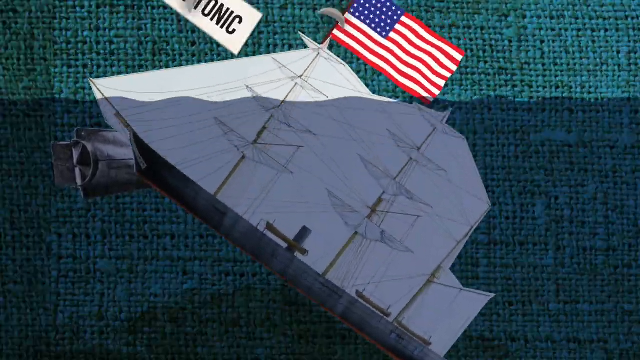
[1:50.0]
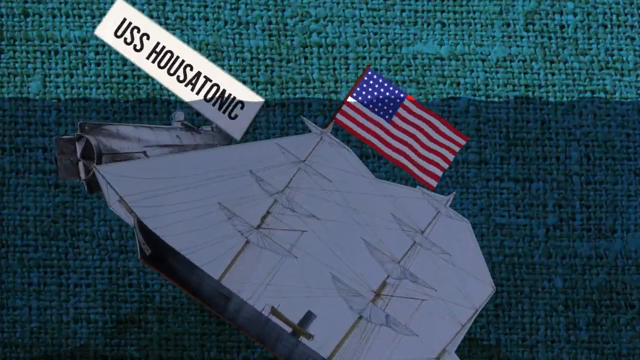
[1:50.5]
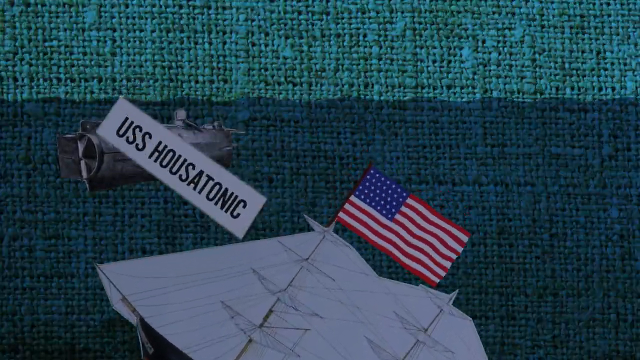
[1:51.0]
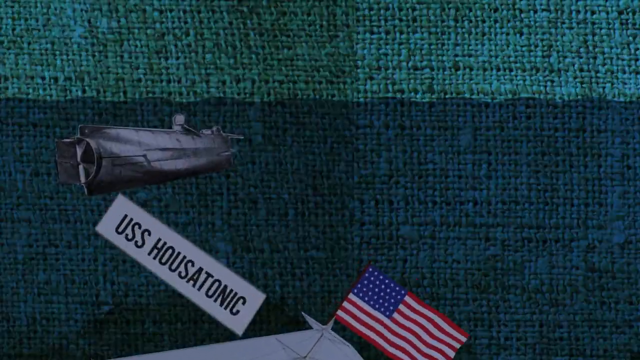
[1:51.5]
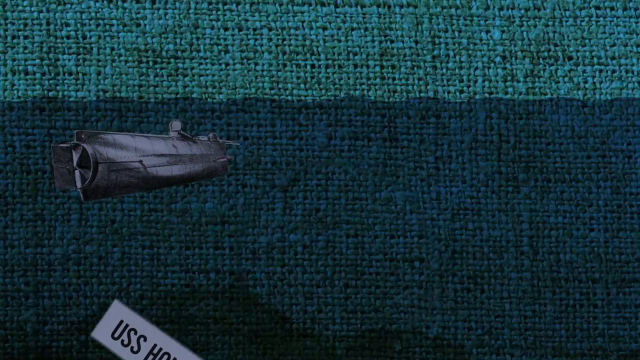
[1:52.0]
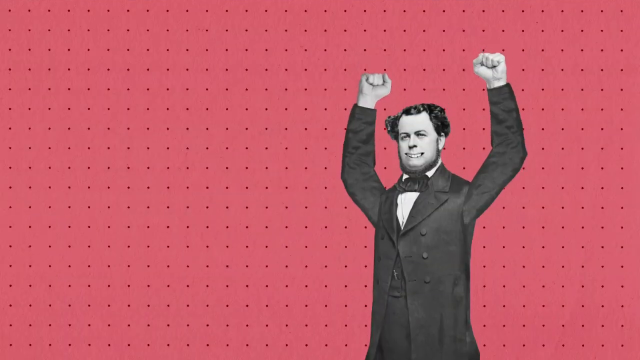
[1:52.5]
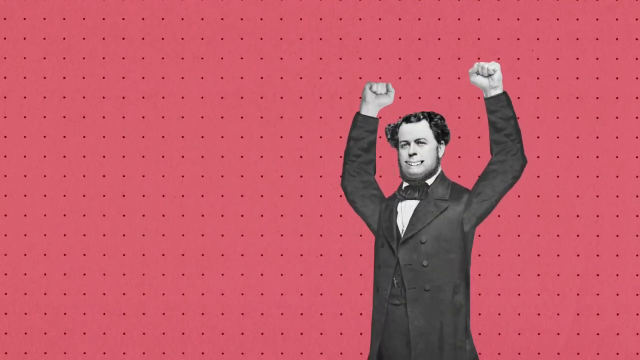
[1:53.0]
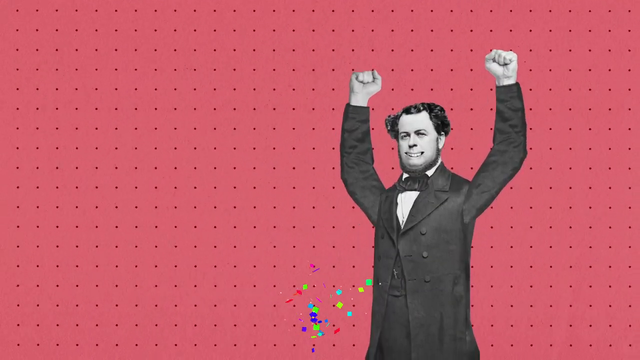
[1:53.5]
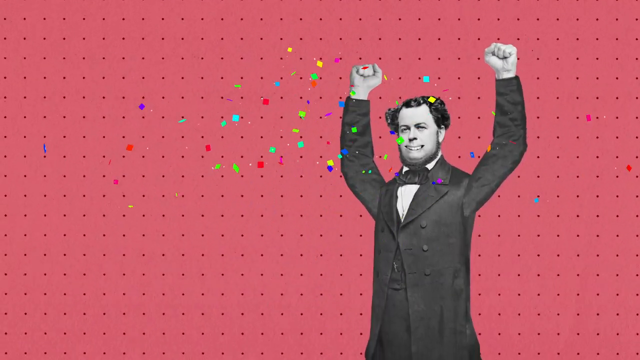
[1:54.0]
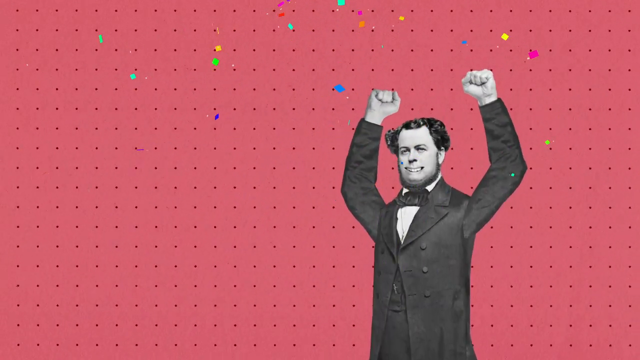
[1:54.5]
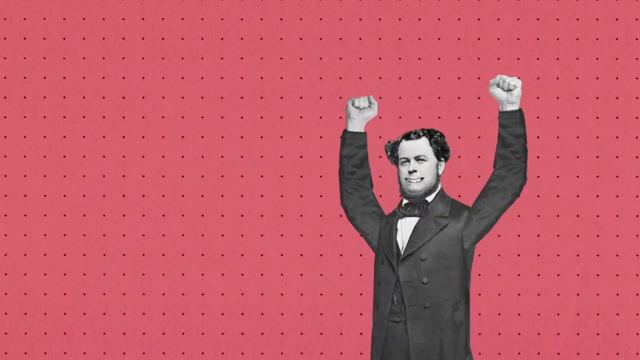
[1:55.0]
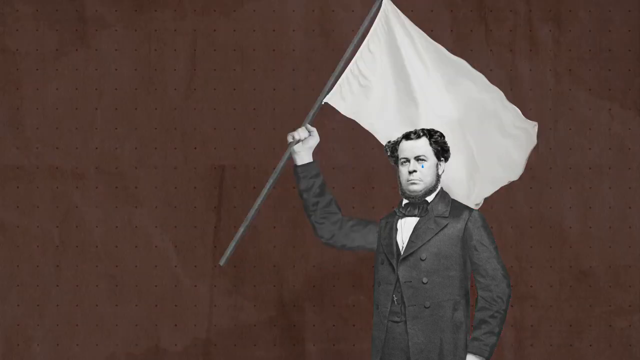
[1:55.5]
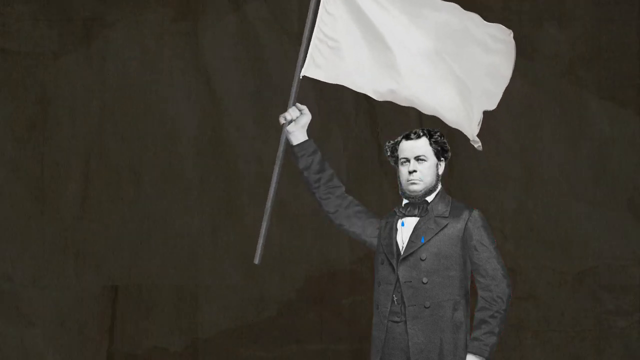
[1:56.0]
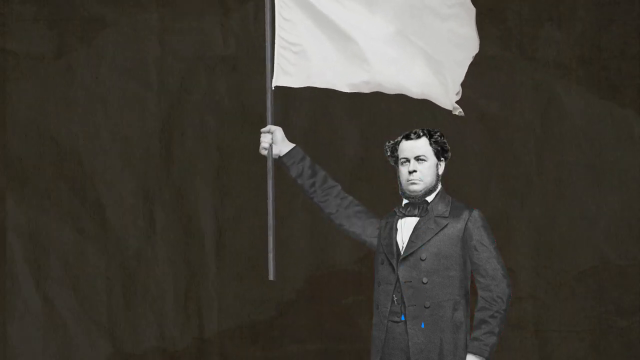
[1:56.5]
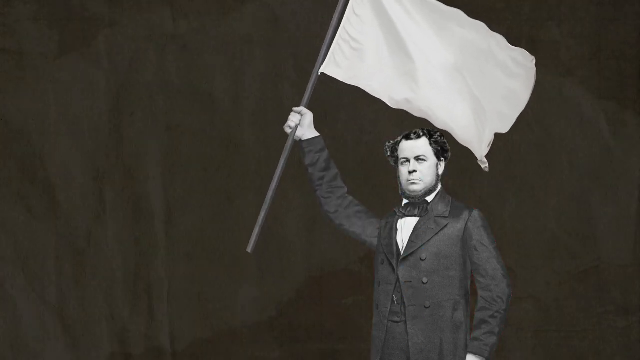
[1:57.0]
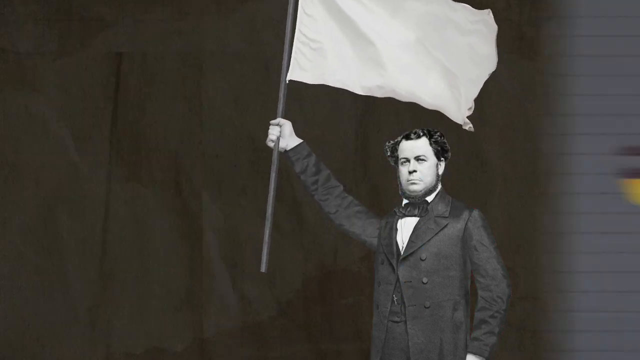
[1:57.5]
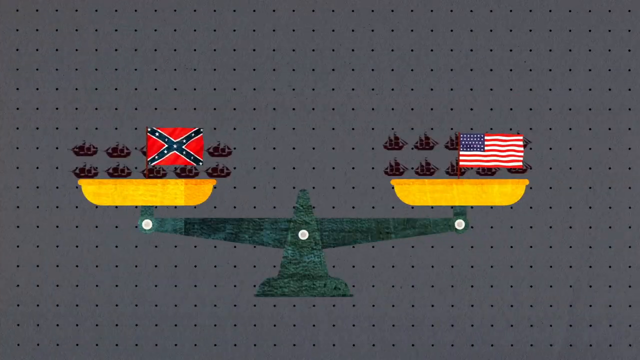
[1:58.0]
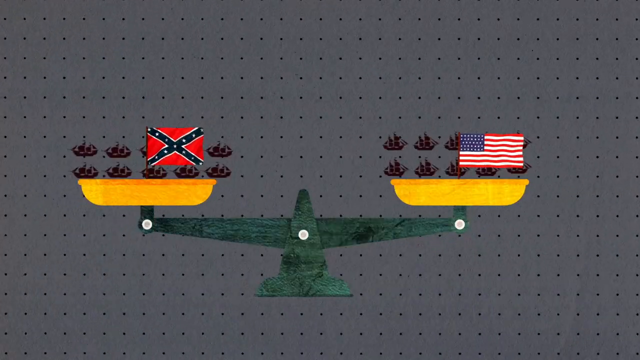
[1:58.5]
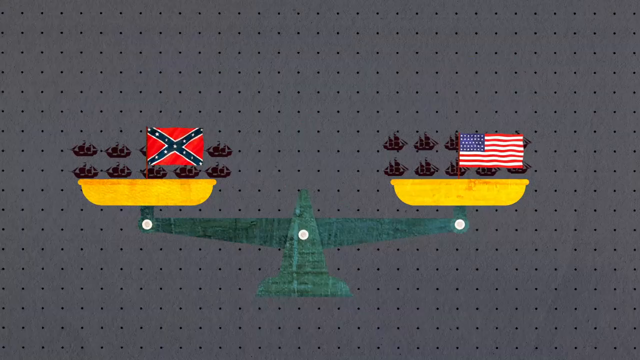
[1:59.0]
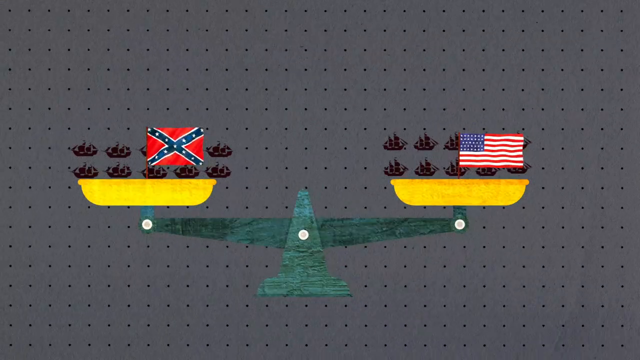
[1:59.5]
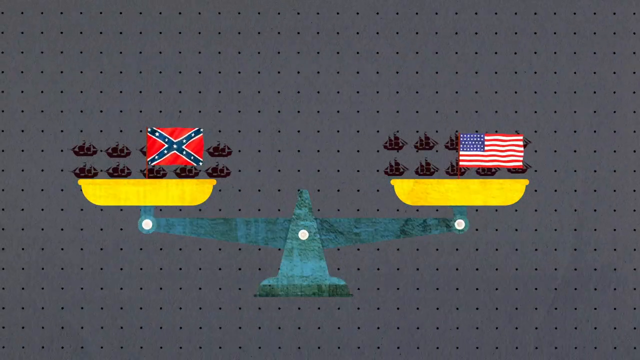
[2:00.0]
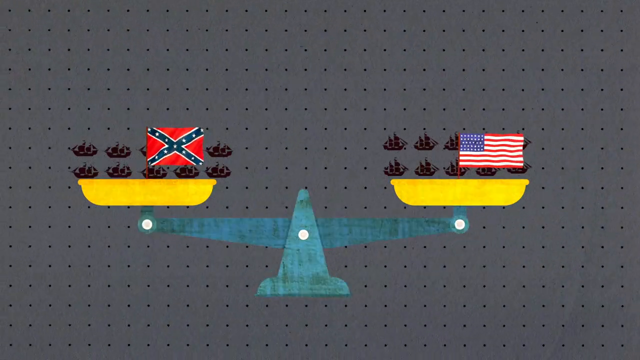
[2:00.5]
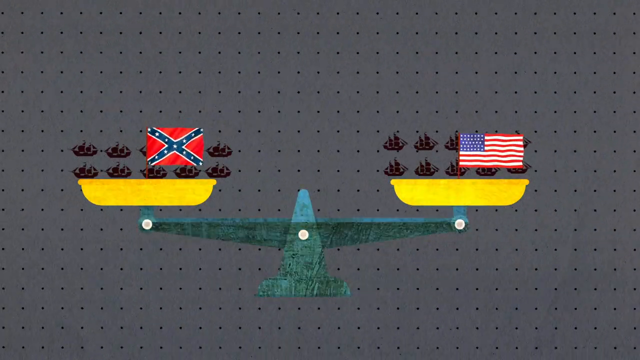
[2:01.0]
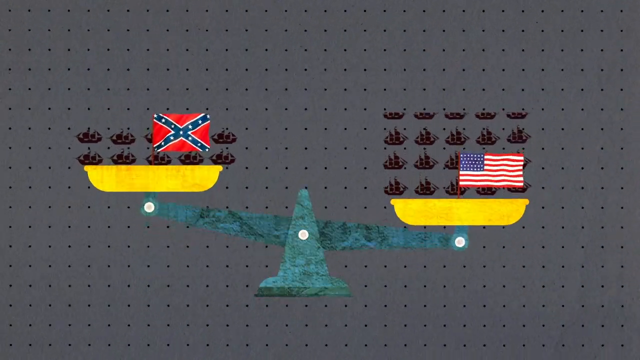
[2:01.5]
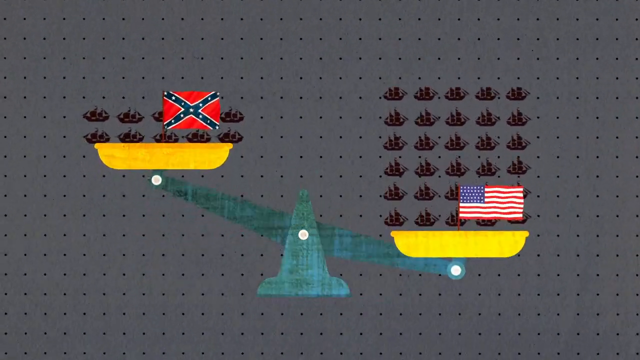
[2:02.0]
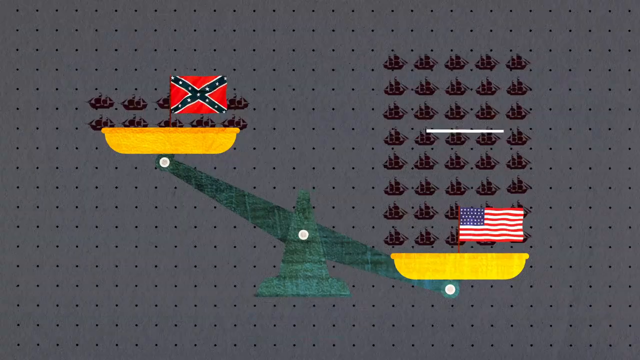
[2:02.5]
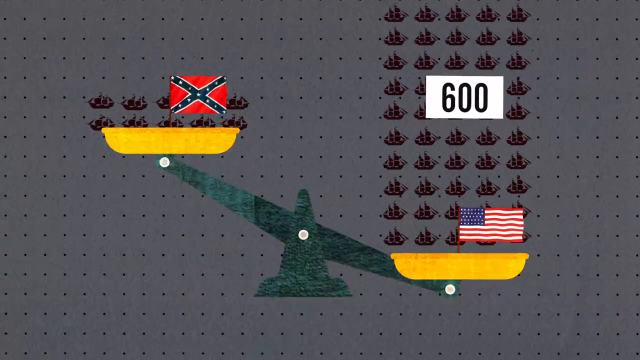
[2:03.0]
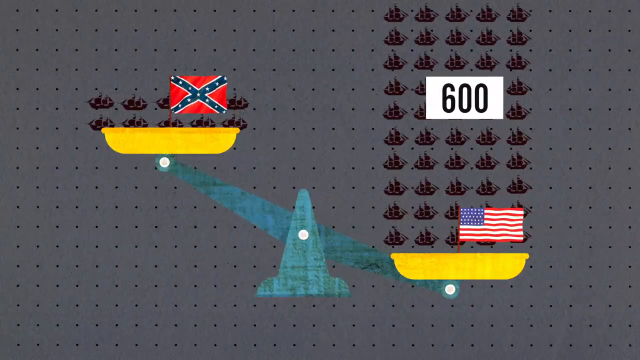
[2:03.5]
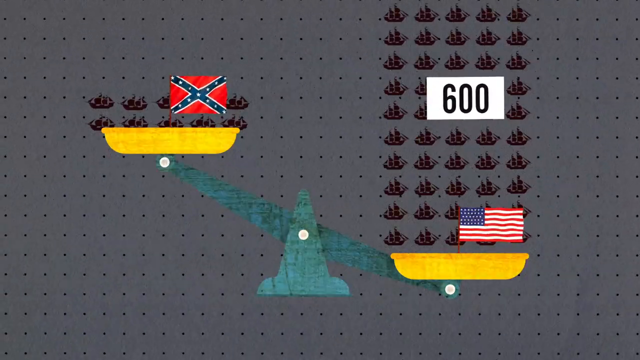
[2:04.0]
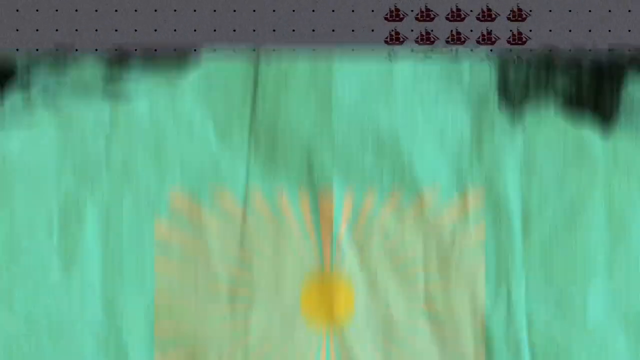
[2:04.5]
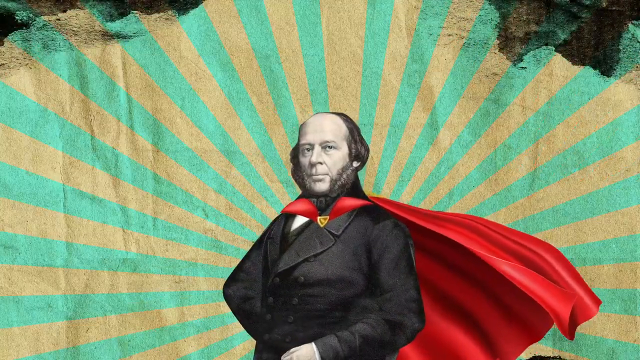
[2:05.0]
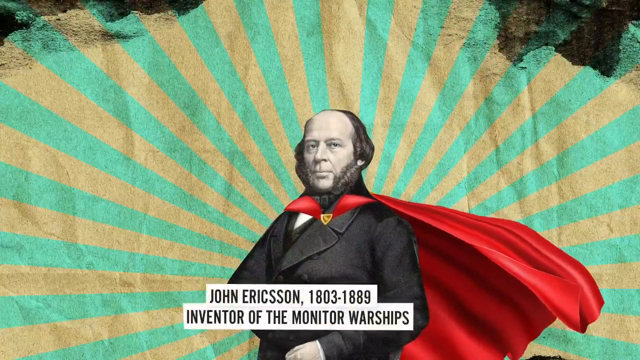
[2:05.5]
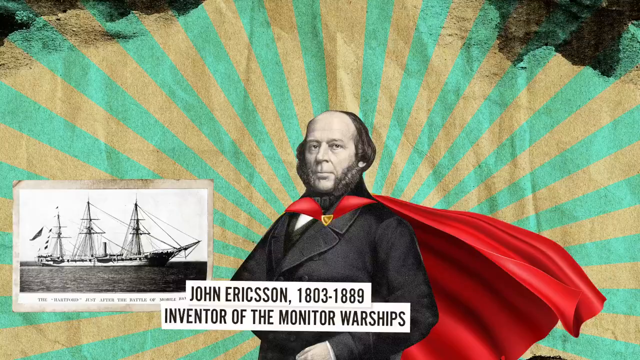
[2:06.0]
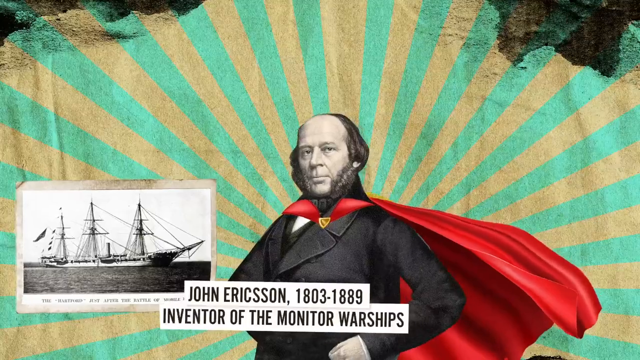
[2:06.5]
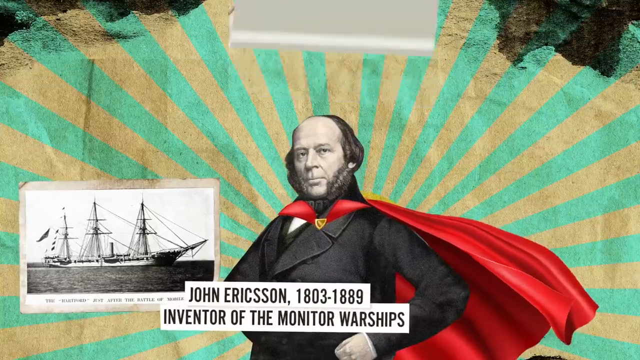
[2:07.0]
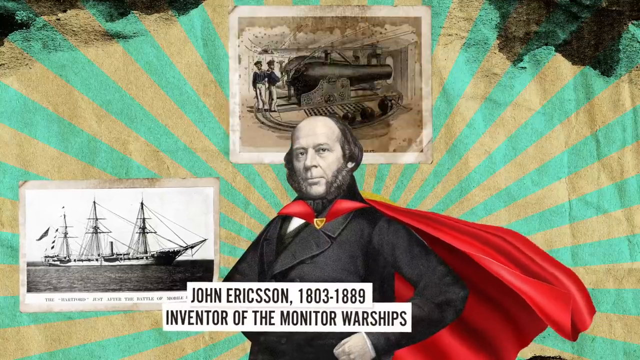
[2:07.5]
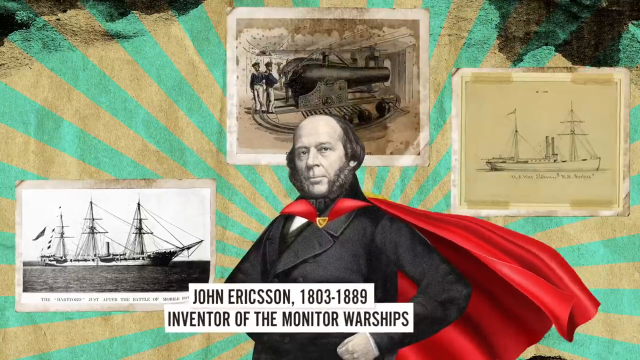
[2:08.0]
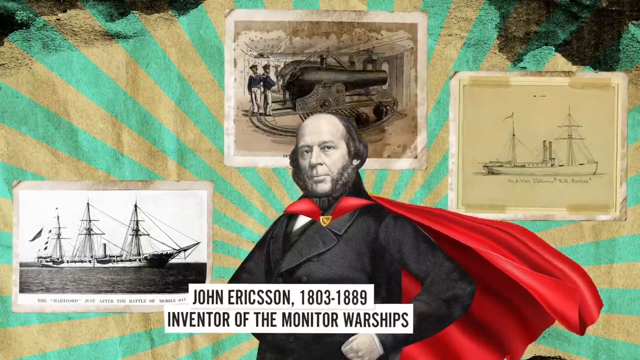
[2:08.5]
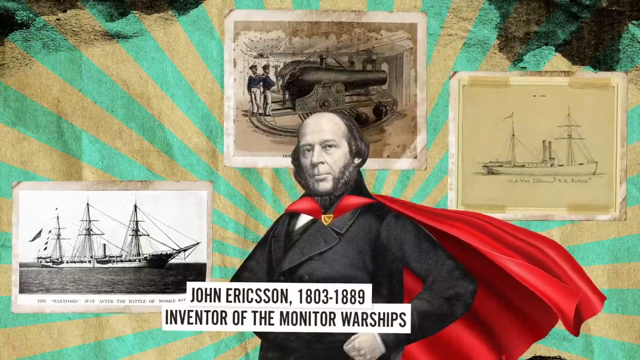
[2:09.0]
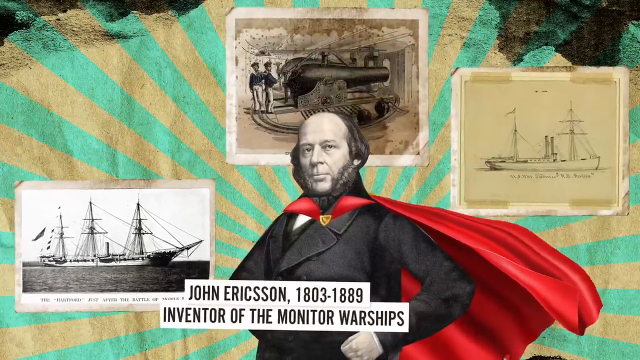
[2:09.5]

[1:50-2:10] The USS Housatonic sinks far under the surface of the water. Next comes an altered image of a man shown earlier in the video: largely a still, realistic photograph, but altered to show him with his hands raised as if in celebration. He is standing against a red background. He then lifts a white flag over his head and waves it back and forth. A weighing scale appears, with boats under the Confederate flag on the left and boats under the American flag on the right. At first both sides are equal and at the same level; then the number of ships on the American side expands, and the scale changes so the right side is heavier and goes down. It is then shown that there are 600 Union ships. Another historical photograph of a man follows, showing him wearing a red cape.